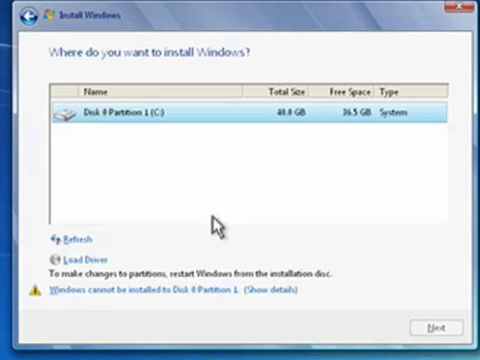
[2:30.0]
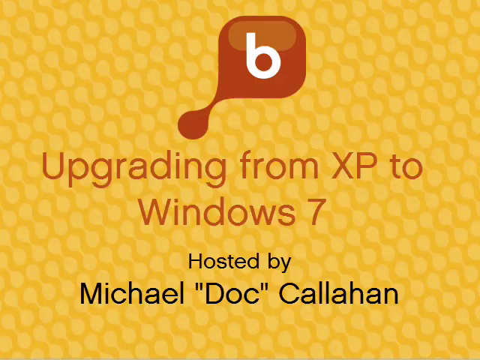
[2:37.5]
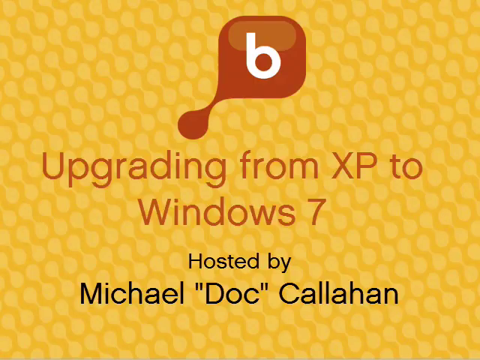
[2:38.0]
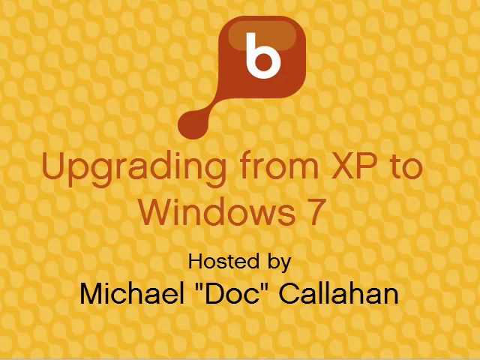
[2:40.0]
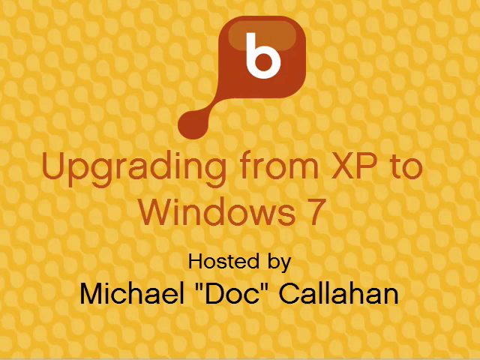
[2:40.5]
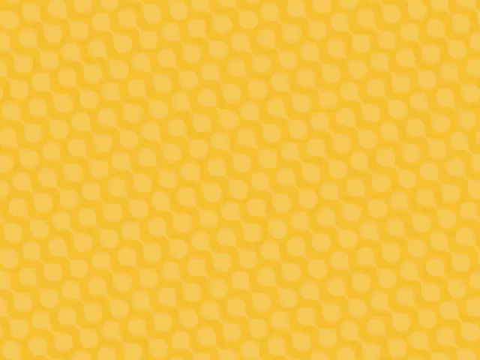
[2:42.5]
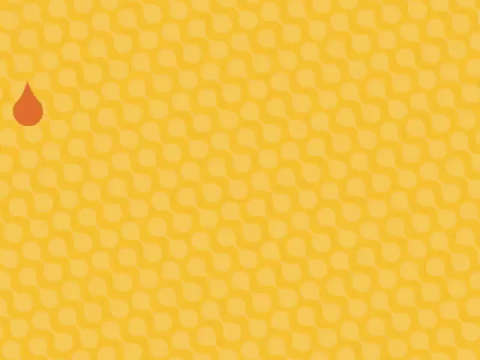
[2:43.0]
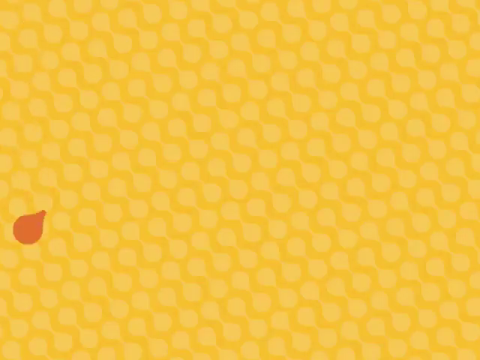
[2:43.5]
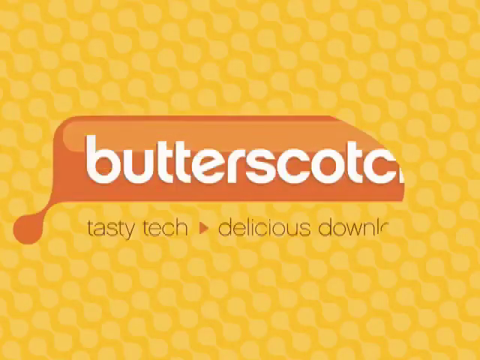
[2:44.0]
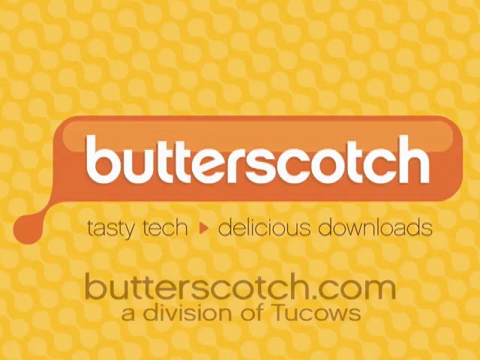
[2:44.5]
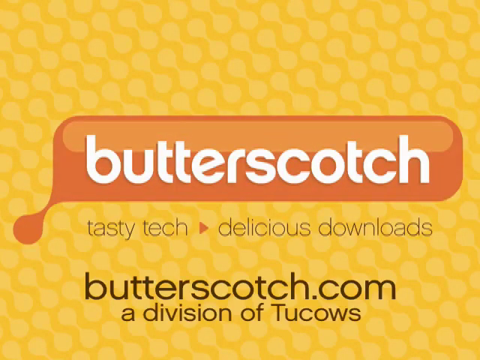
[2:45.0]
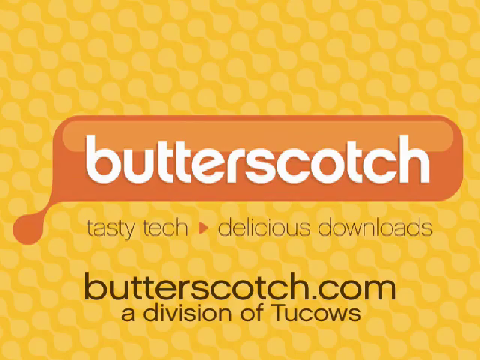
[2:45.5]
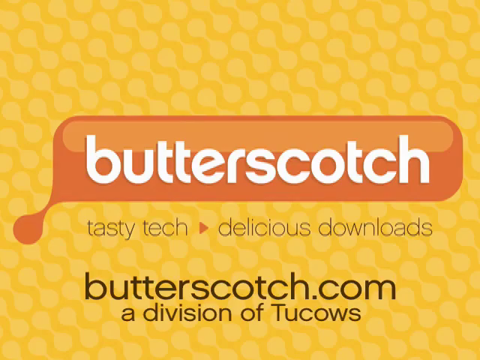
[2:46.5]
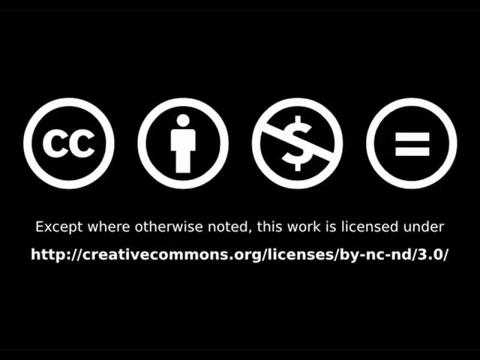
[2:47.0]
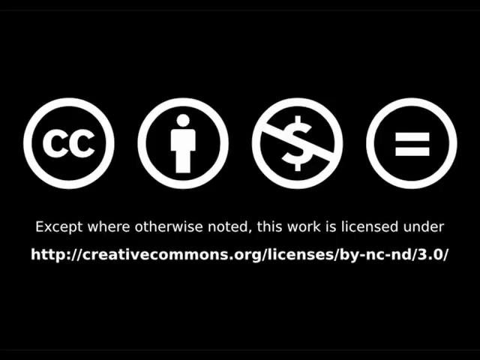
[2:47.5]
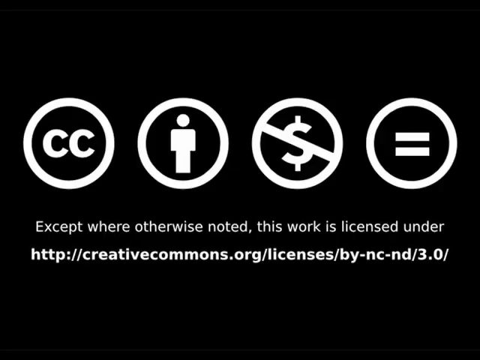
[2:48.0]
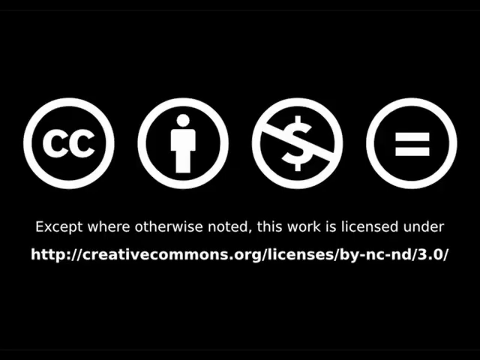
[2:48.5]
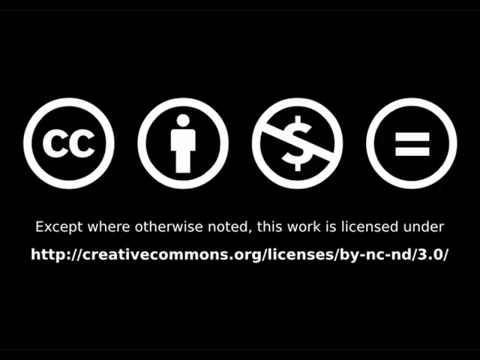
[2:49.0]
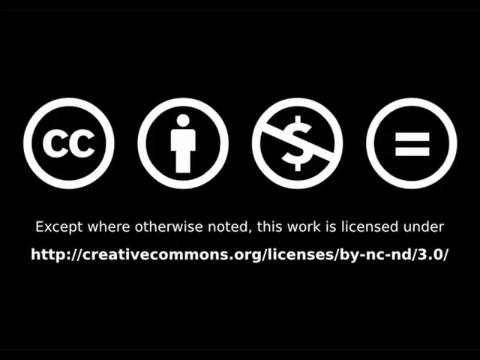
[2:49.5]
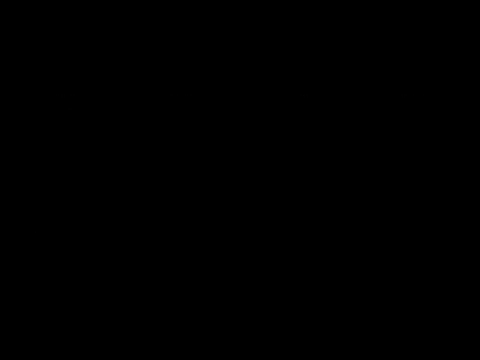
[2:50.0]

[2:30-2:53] The screen says "where do you want to install Windows," and at the top there is one option that says "disk and platform," listing the total space, the free space and the type. At the bottom it says "to make changes to platforms, restart Windows from the installation disk," and a warning symbol says "Windows cannot be installed to disk 8 partition 1." The white cursor arrow is in that section. The video then cuts to a lowercase letter b in a brownish orange box with a little drip coming out of it on the left, with the text "upgrading from XP to Windows 7 hosted by Michael Doc Callahan." On a completely white background, a drip that looks kind of brownish comes down and opens into the words "butterscotch, tasty tech, delicious downloads, butterscotch.com, a division of Tuscows." Finally, four white circles appear on a black background: CC in a circle, an image of a human in a circle, a dollar sign with a slash through it in a circle, and an equal sign, along with the text "except where otherwise noted this work is licensed under" and an HTTP address.